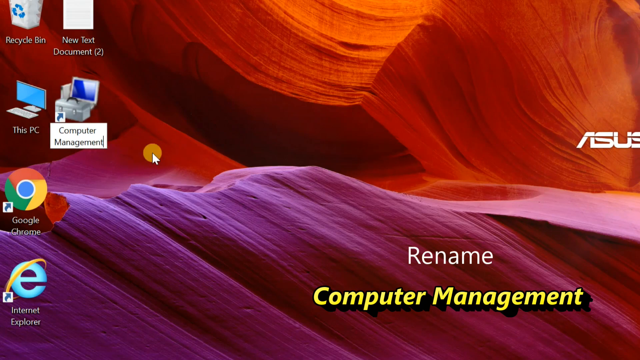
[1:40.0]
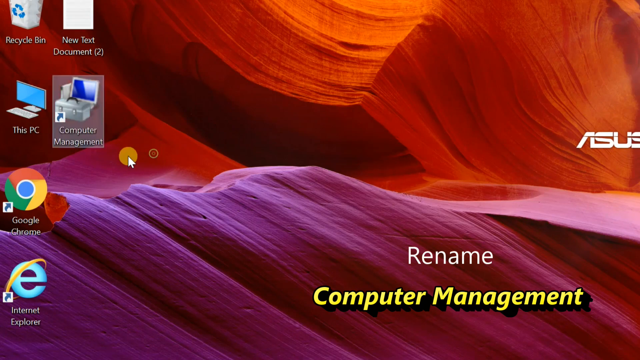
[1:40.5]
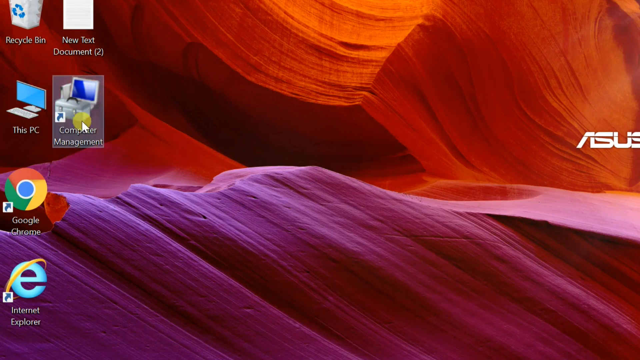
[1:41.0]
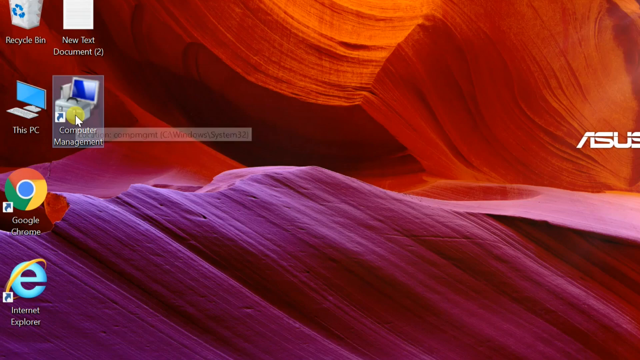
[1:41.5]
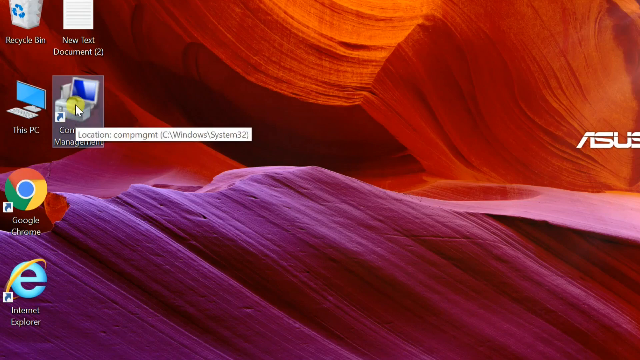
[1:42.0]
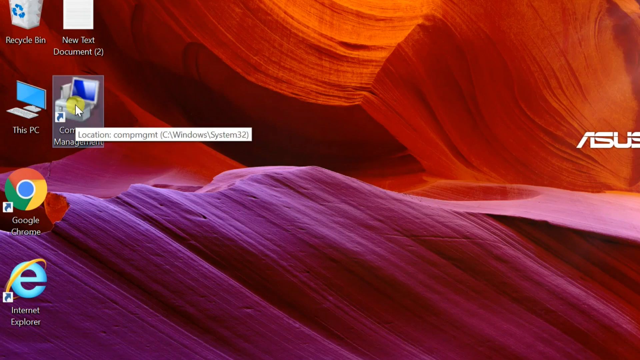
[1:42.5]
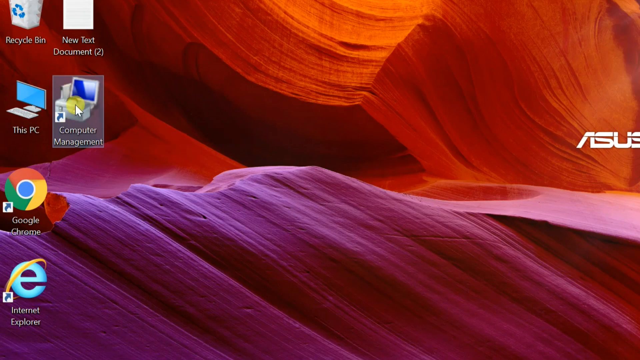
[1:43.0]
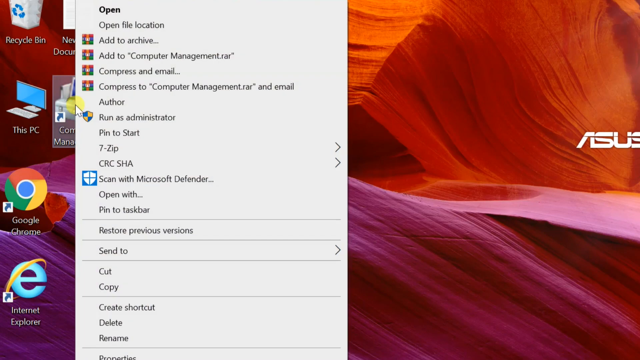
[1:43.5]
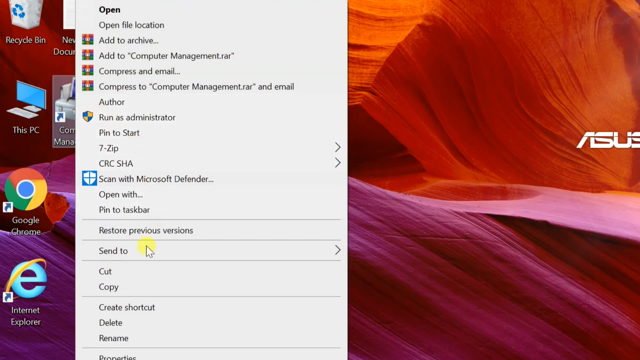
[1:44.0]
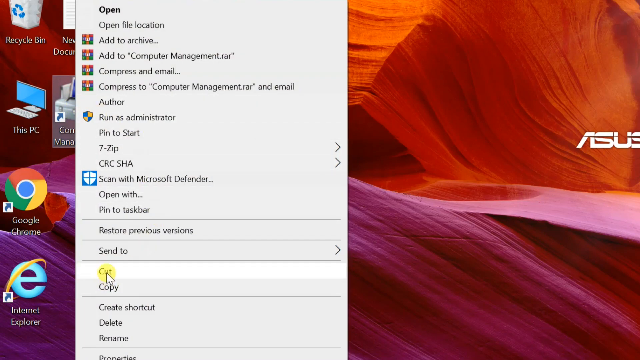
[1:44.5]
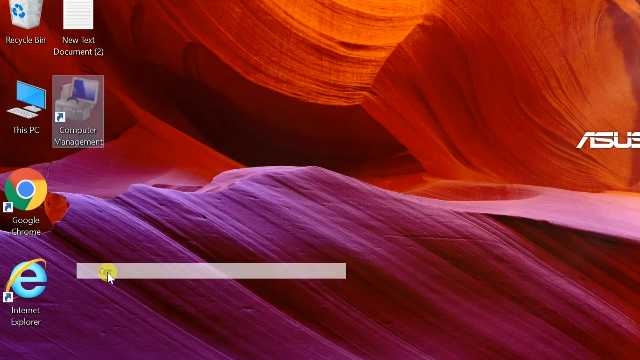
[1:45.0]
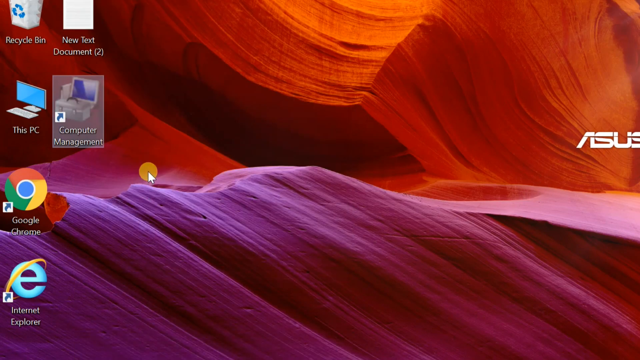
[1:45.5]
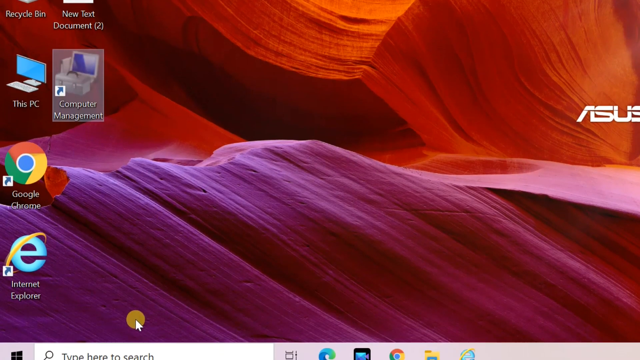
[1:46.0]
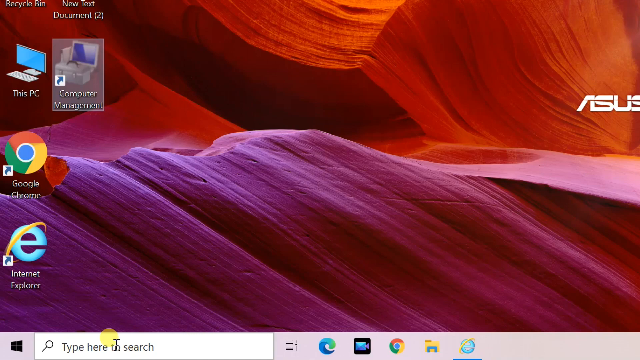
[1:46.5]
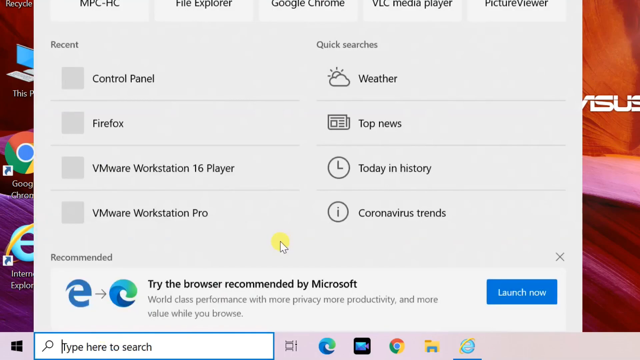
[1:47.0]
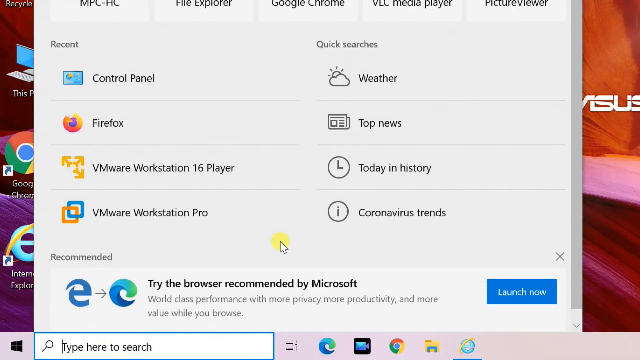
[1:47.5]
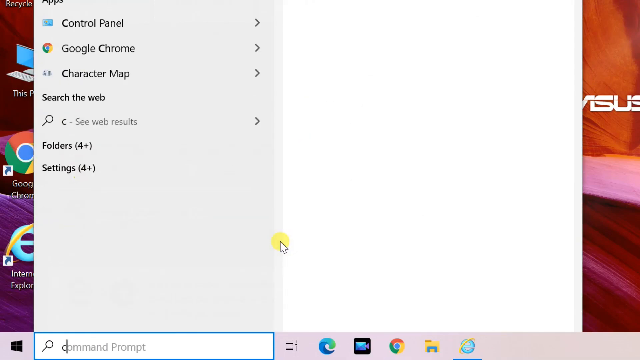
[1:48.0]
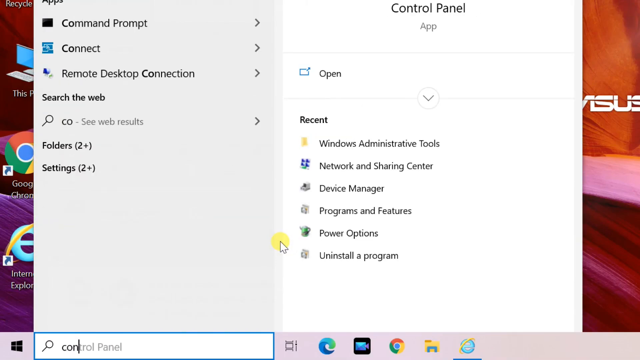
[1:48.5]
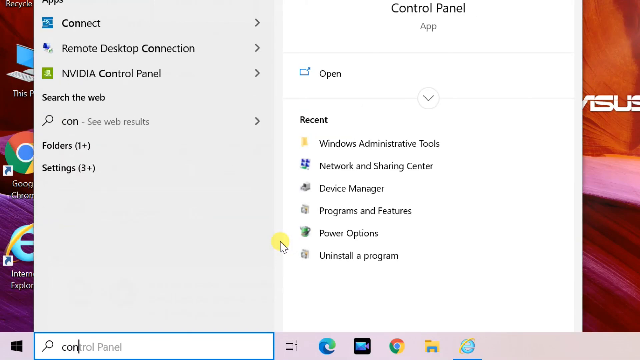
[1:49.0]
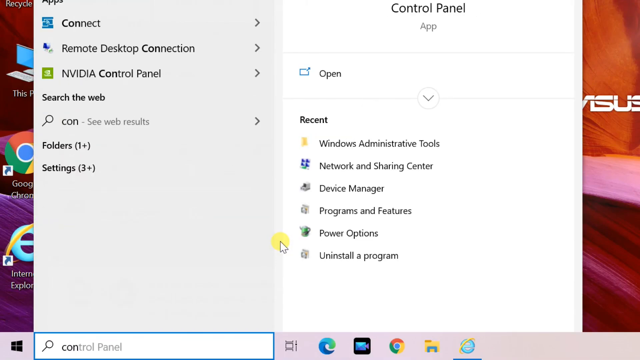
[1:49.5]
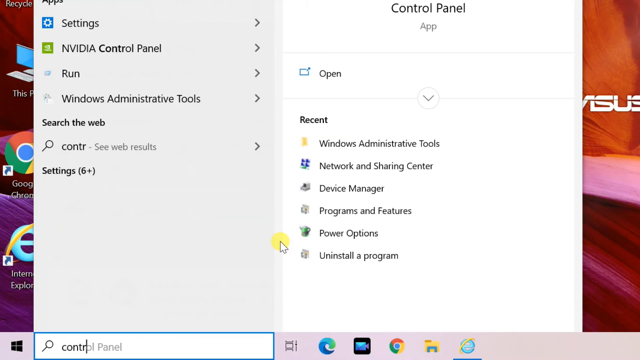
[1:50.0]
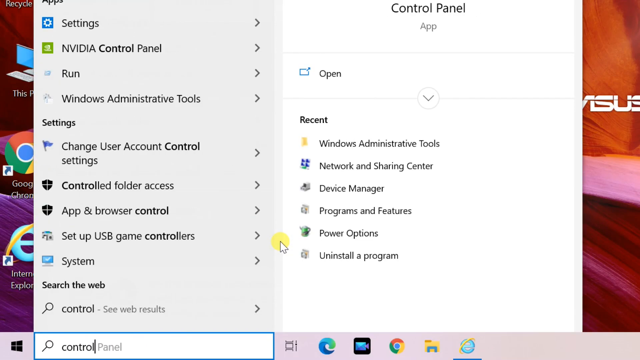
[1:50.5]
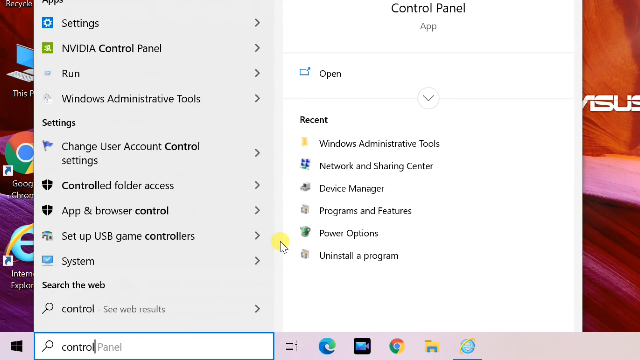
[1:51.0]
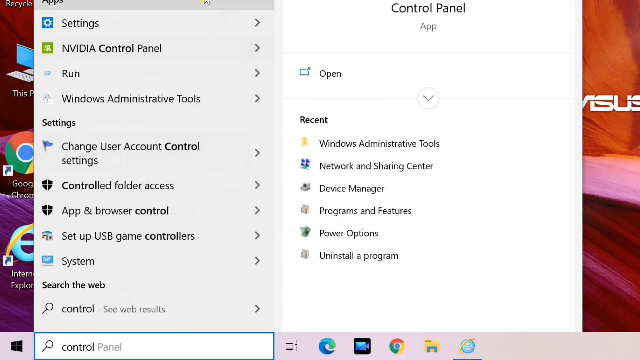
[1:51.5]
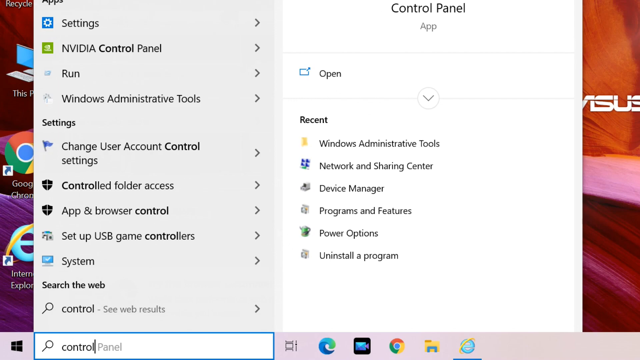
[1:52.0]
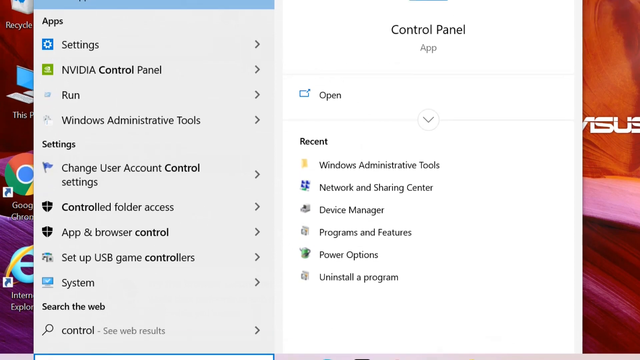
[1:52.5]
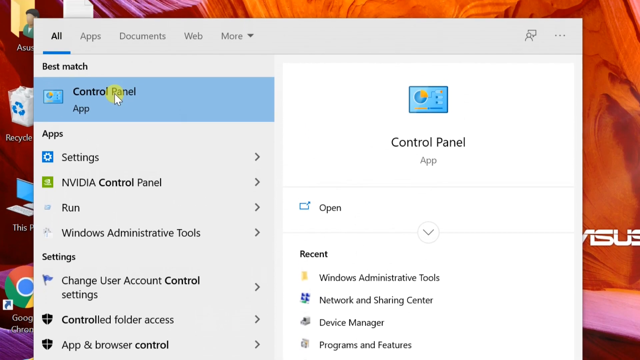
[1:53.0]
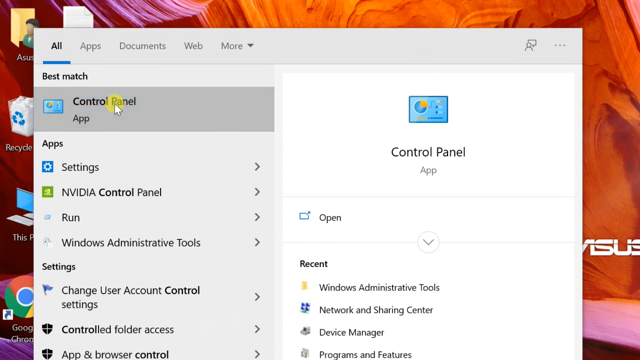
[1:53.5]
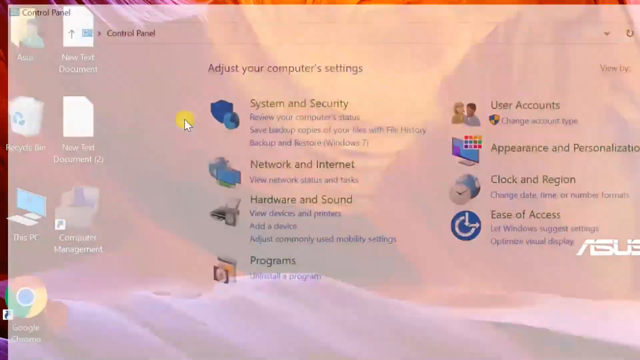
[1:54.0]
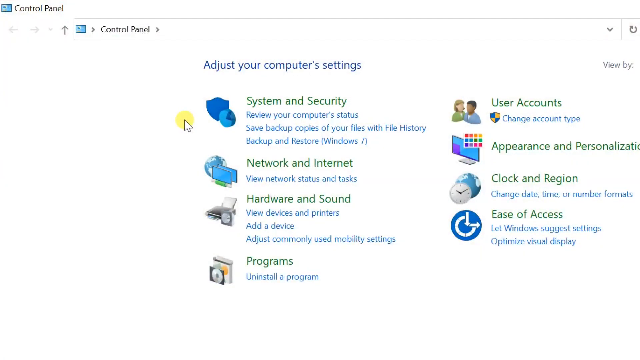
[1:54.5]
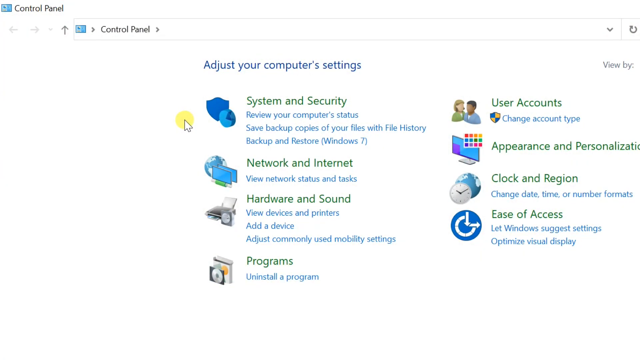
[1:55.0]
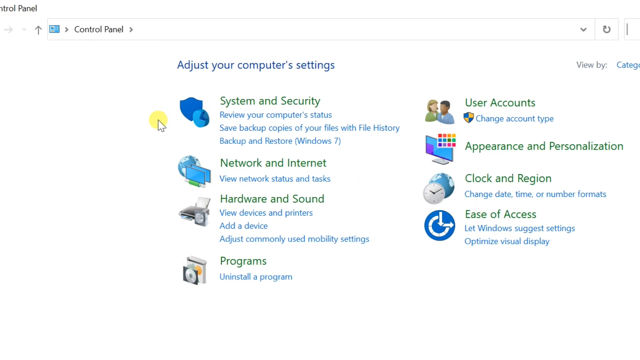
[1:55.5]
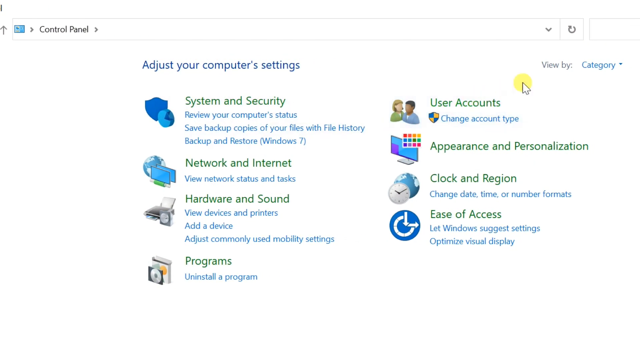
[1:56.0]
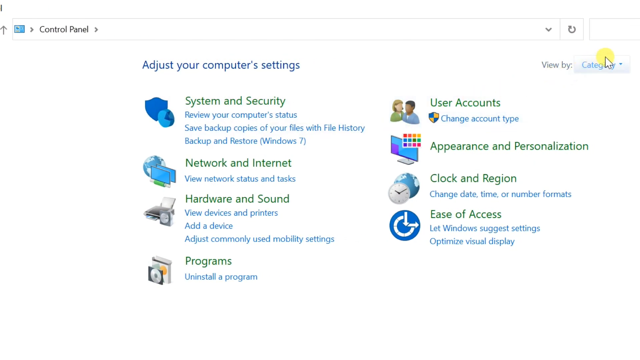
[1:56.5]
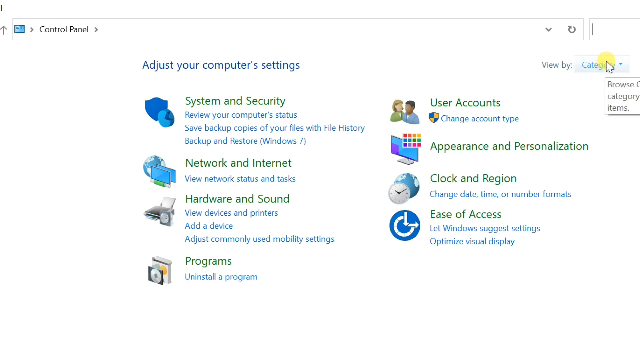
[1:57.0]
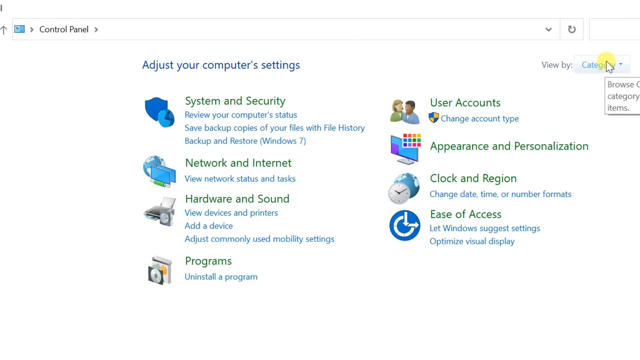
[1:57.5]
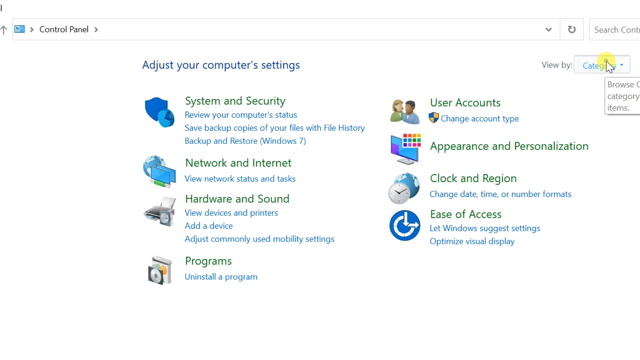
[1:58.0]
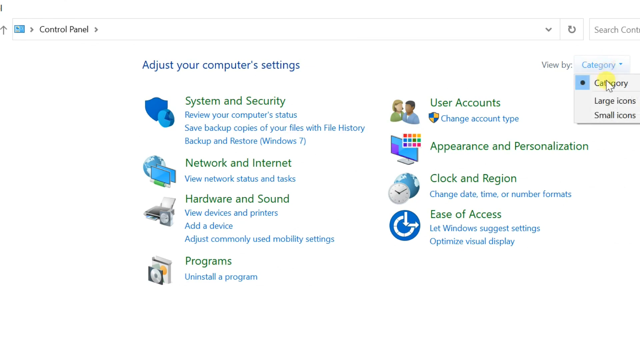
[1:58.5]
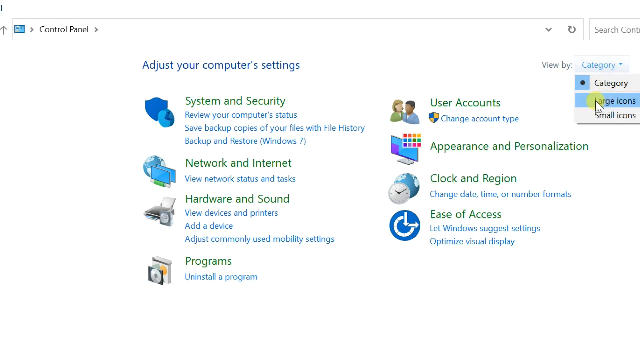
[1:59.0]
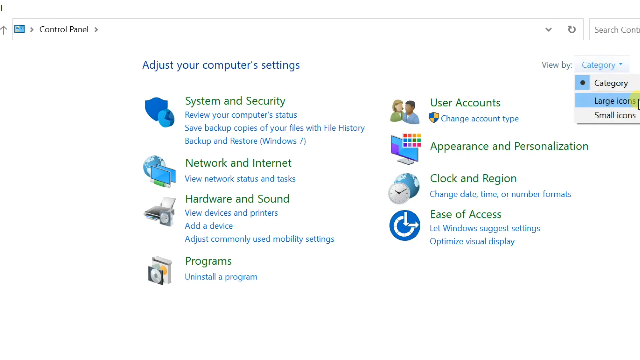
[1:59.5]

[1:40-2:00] The mouse hovers over a computer icon labeled computer management on what seems to be the desktop of a Windows computer being screen mirrored. The user clicks on the icon, scrolls down, and a new window of actions for the icon pops up; the action taken is copy and cut. A new window opens in the files, and the user searches for control panel. The control panel window opens, listing system and security, network and internet, hardware and sound, programs, user accounts, user and personalization, clock and region, and ease of access. The user circles the mouse around the right corner where it says "view by category," as if about to click it to change the view.